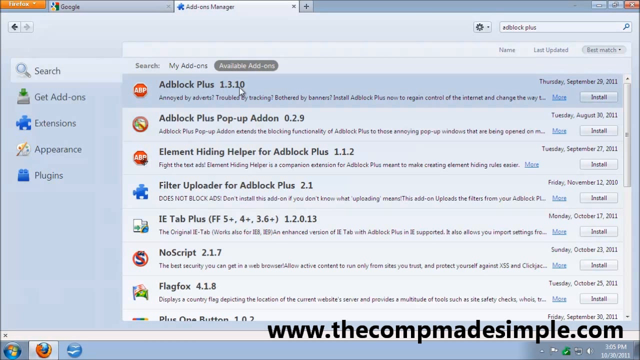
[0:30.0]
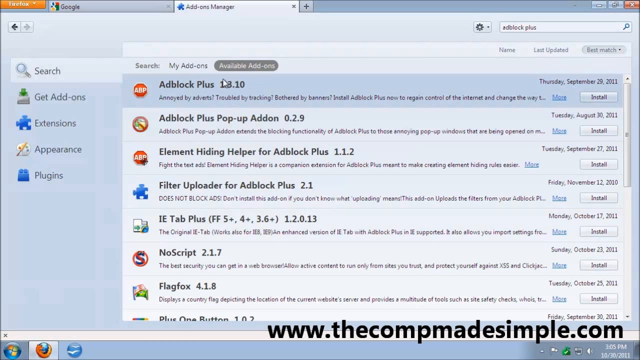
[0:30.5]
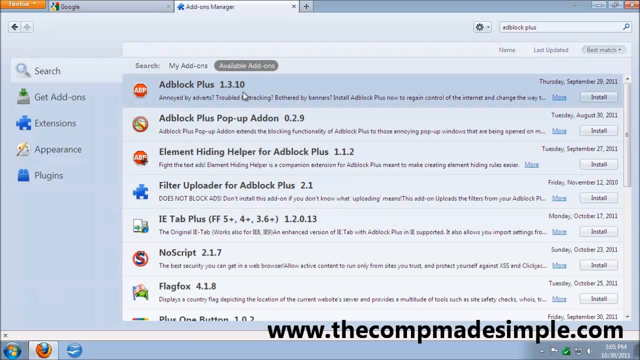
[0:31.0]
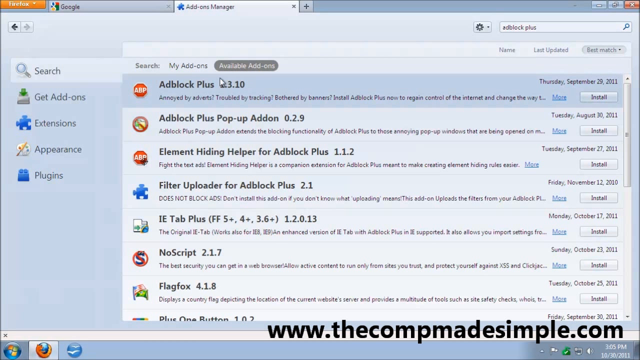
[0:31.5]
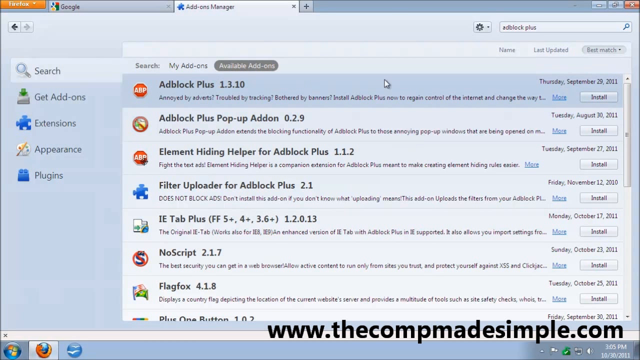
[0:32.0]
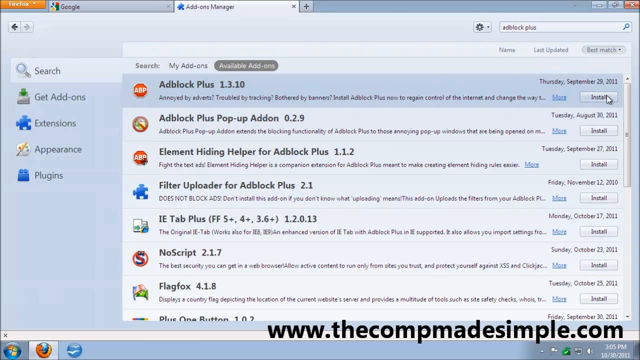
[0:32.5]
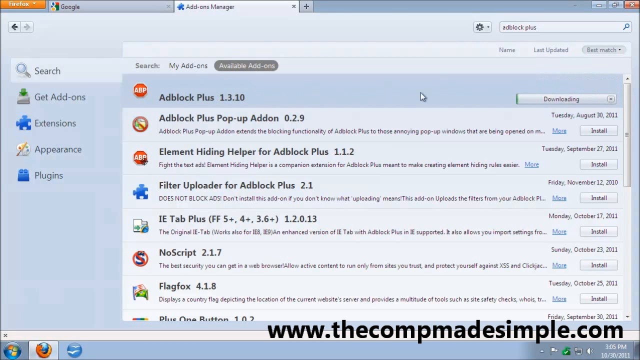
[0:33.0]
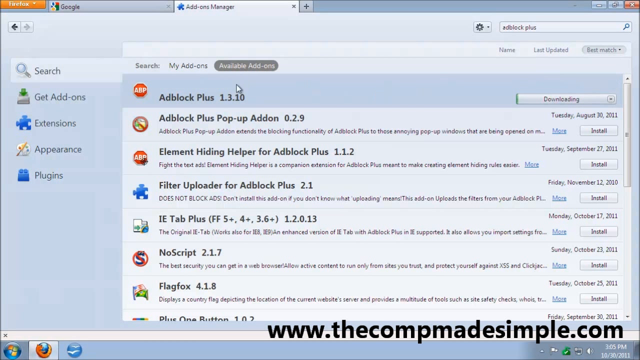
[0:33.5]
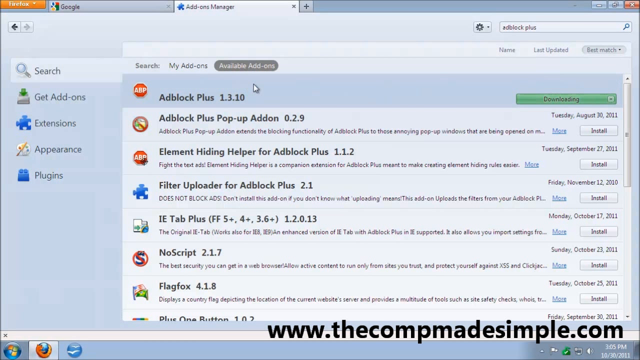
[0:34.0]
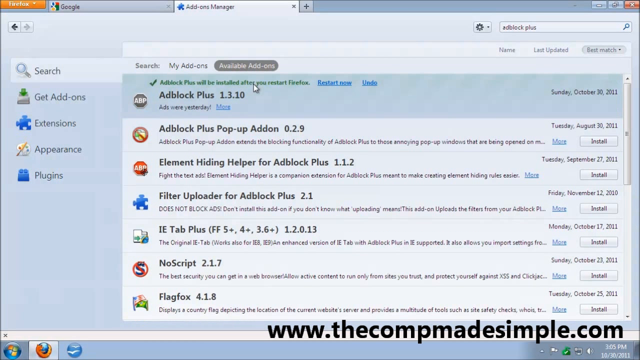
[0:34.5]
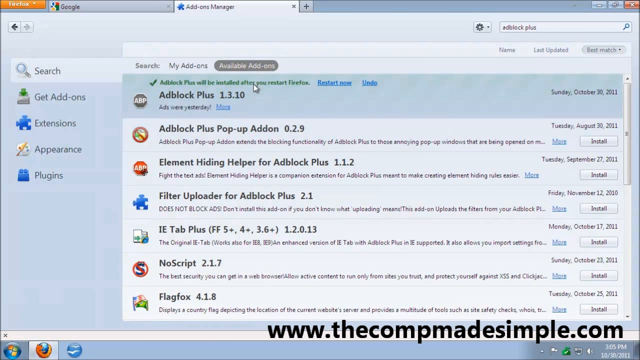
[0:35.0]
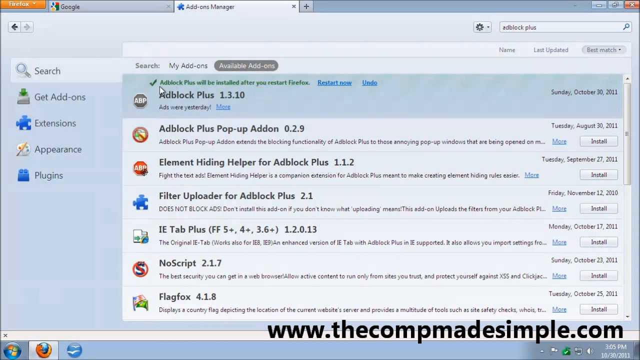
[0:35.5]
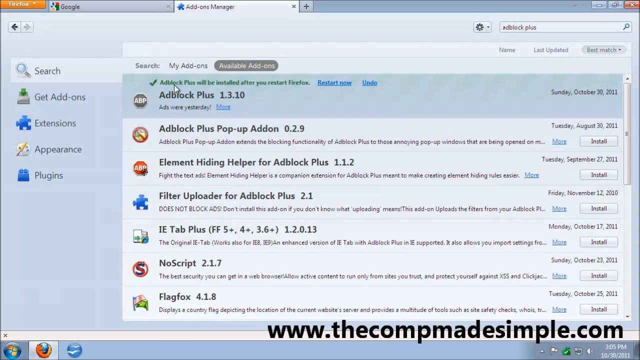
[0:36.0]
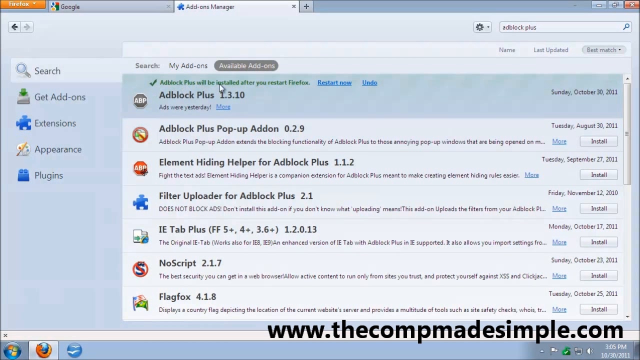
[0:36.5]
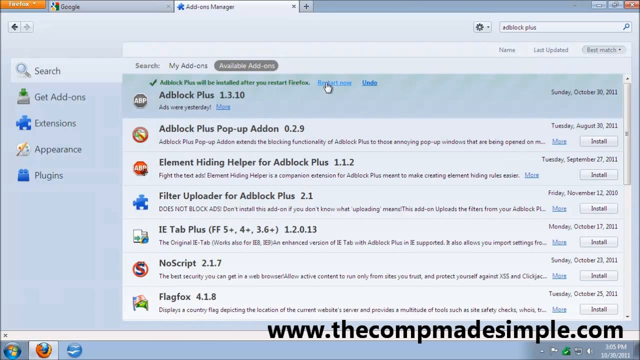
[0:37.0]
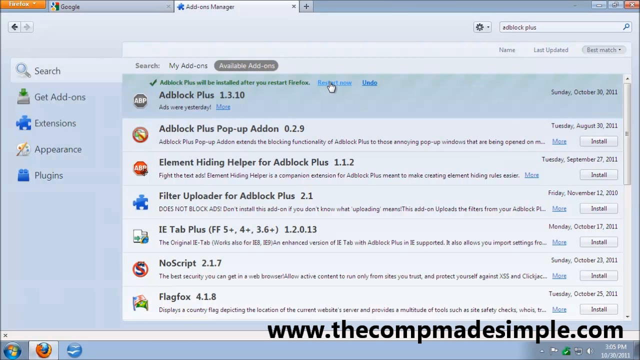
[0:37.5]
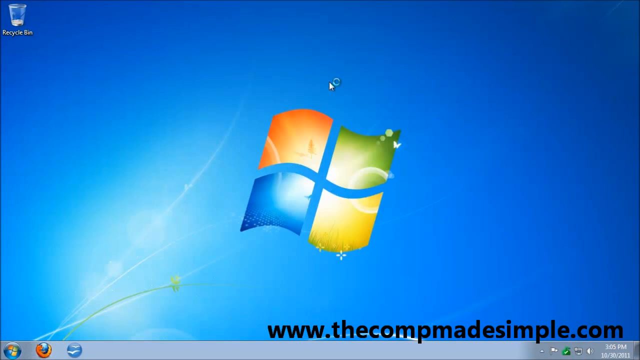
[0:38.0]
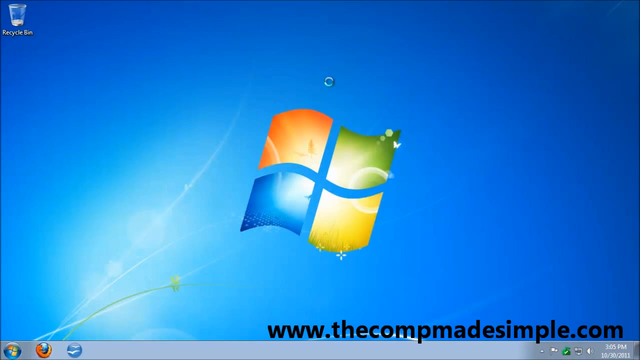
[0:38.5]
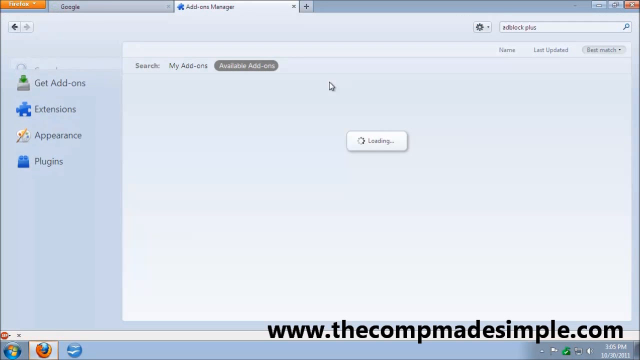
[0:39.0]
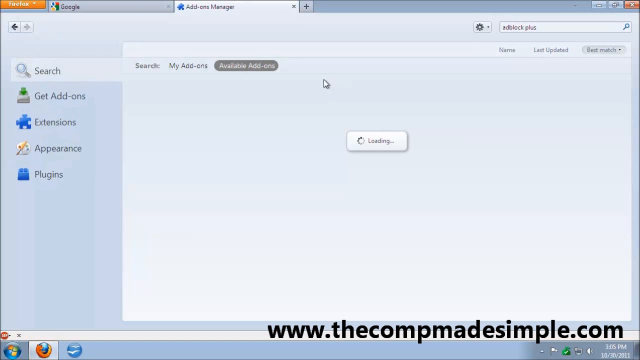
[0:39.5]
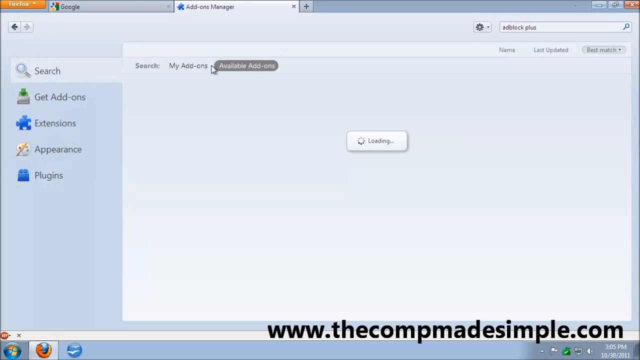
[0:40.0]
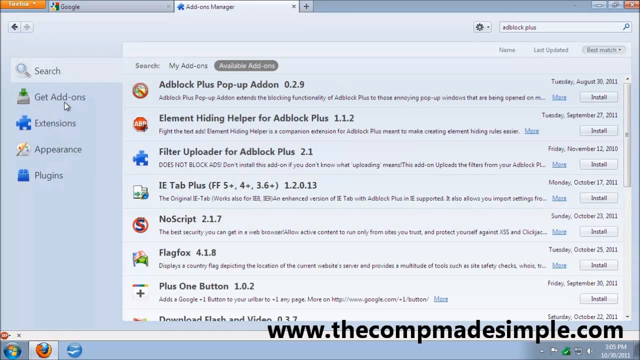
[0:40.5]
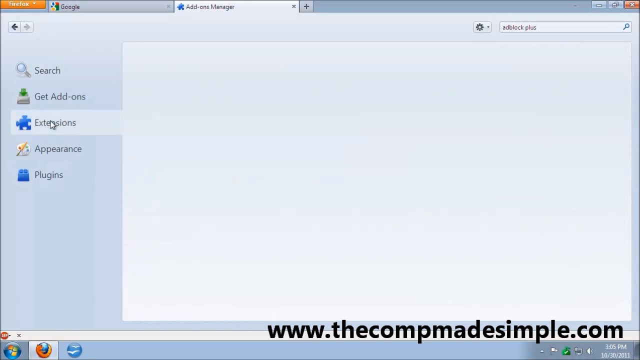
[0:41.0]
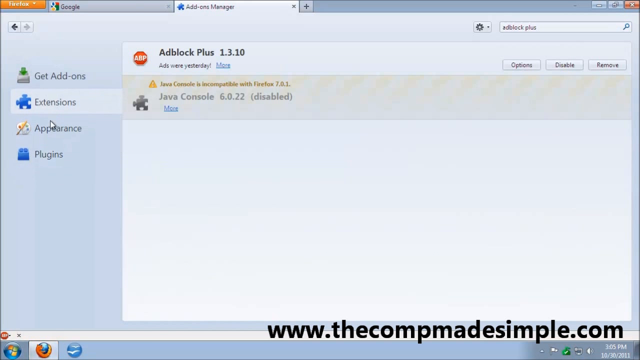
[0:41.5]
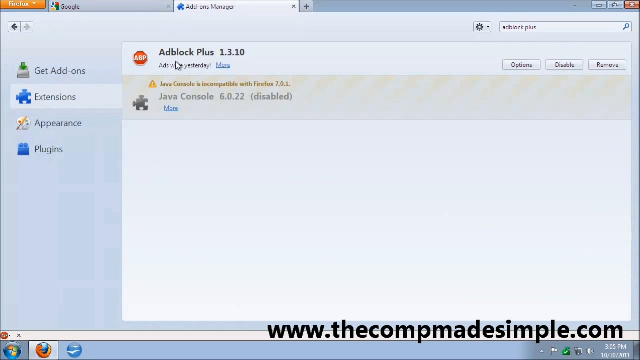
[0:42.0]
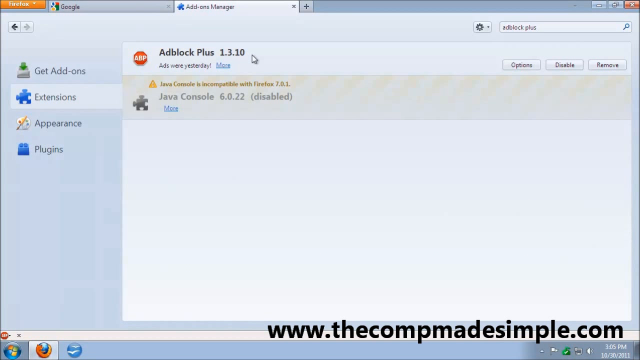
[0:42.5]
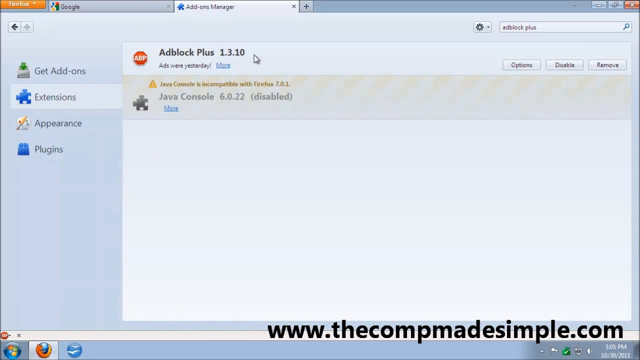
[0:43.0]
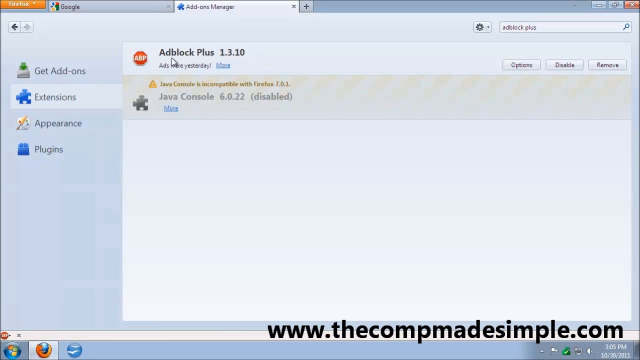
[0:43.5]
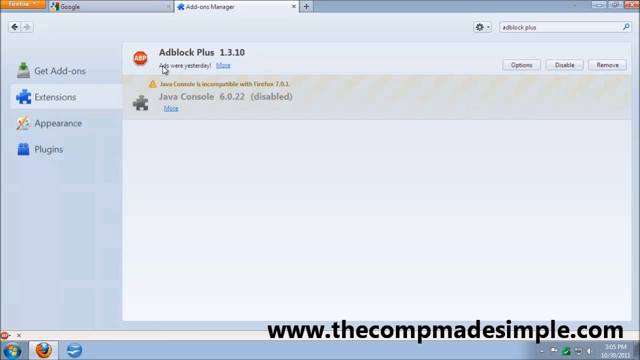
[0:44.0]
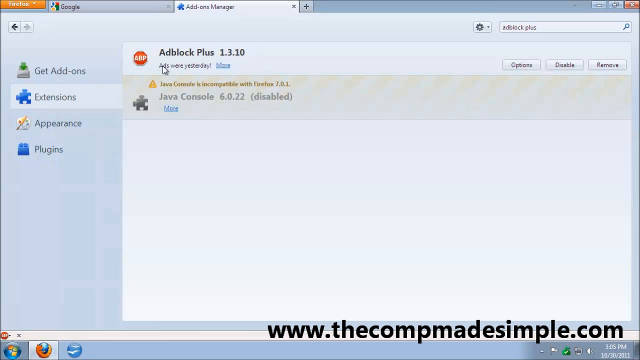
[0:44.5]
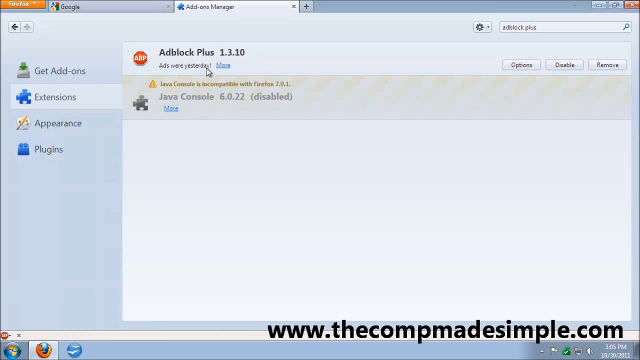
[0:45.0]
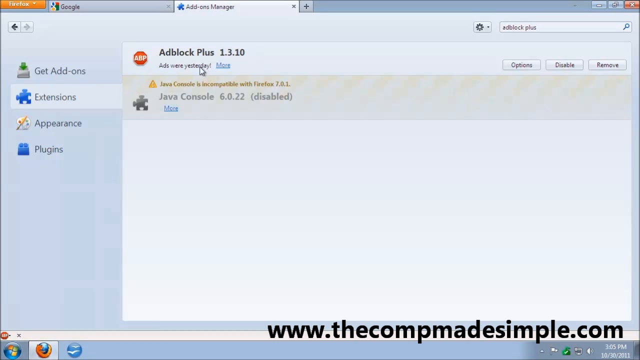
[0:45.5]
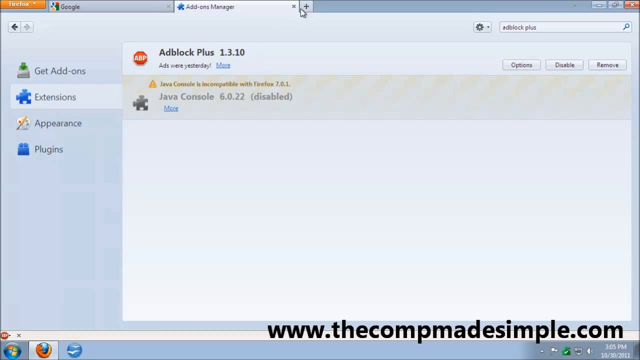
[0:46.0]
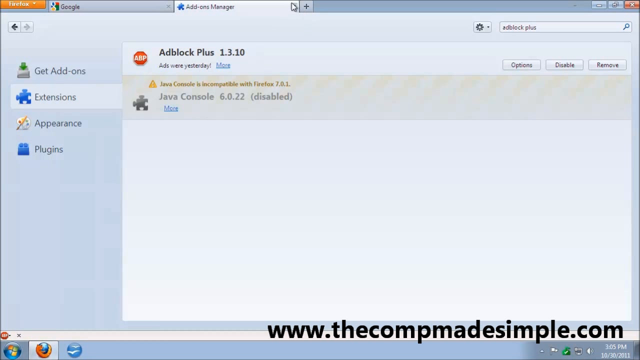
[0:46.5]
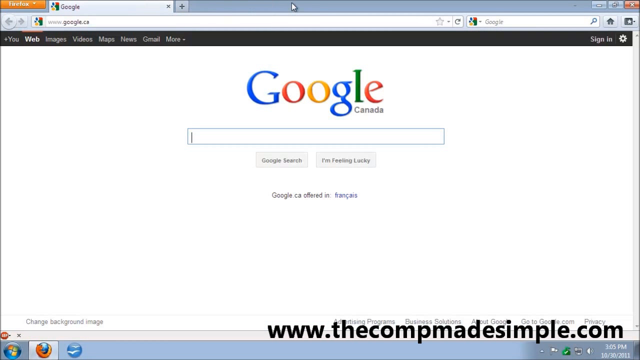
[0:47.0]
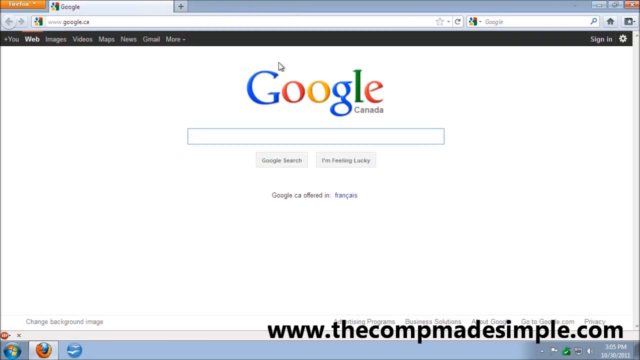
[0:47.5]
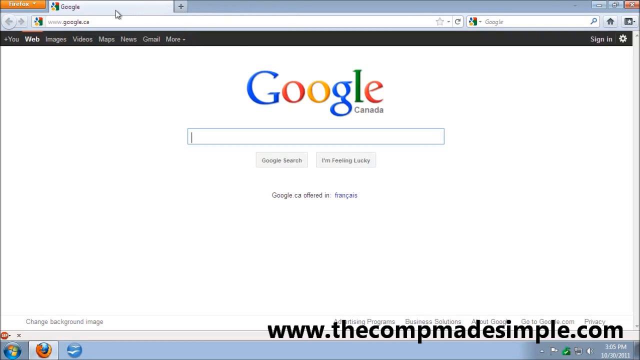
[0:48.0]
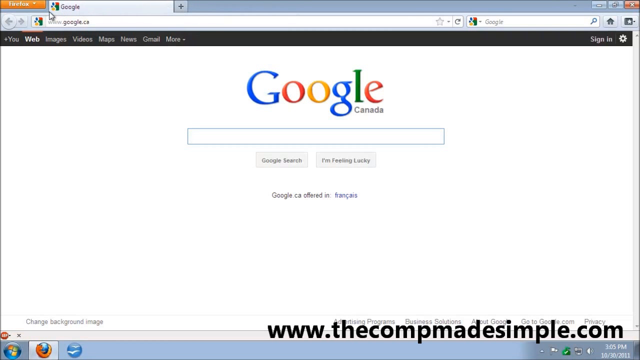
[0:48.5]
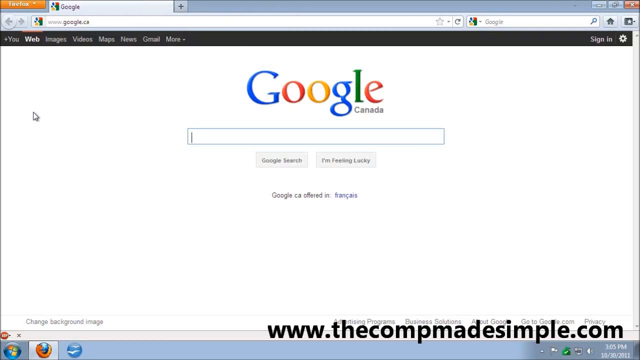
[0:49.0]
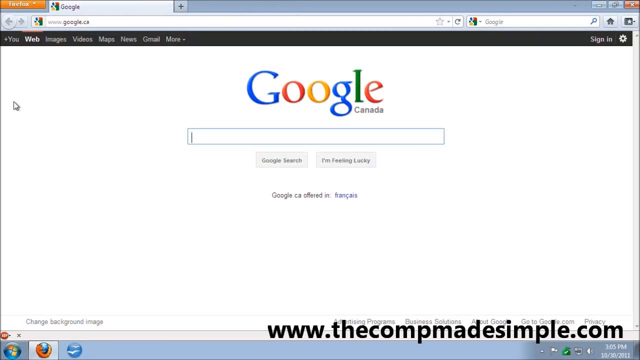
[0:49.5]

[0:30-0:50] The add-ons manager page in Firefox shows the results of a search for AdBlock Plus typed in the search box in the upper right, with the AdBlock Plus entry as the very first entry. The mouse pointer hovers over the entry, moves to the right and clicks the install button, and AdBlock Plus is installed on the browser. The add-ons manager tab is open, and AdBlock Plus is listed on the add-ons page along with the Java console, making two installed add-ons. AdBlock Plus is version 1.3.1.0 and the Java console is version 6.0.2.2; the Java console says it has been disabled. The user then exits the add-ons manager tab, returning to the original page, the Google Canada search engine at google.ca.